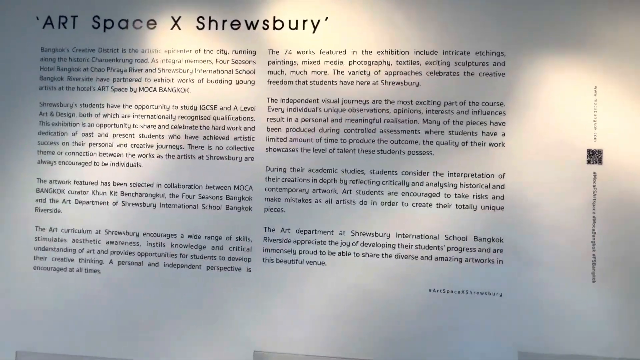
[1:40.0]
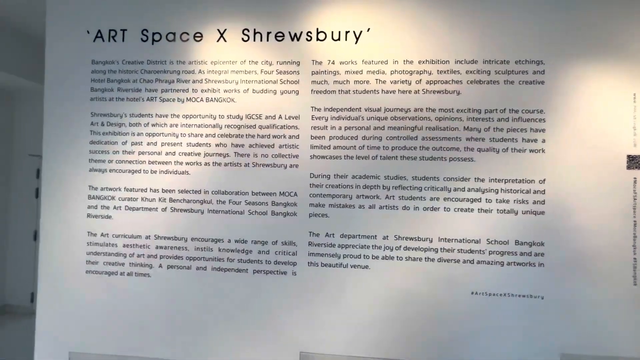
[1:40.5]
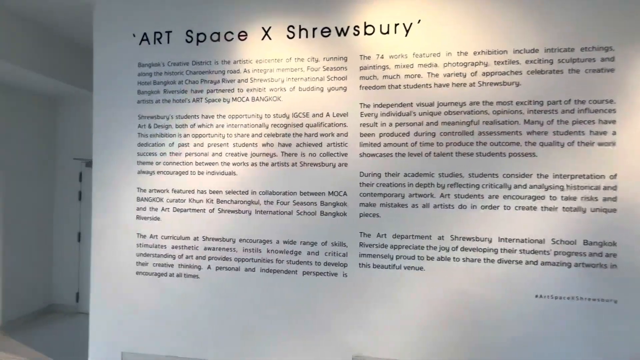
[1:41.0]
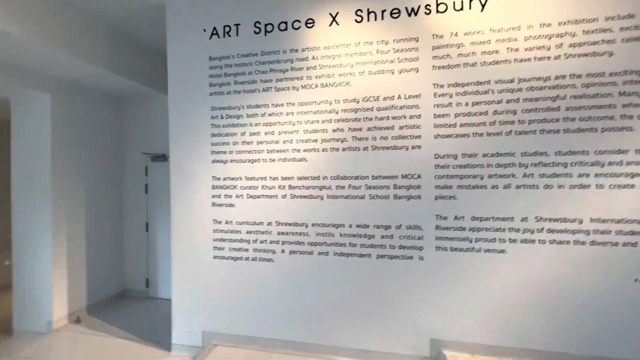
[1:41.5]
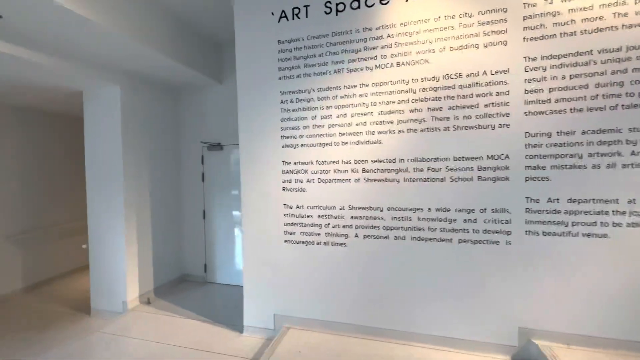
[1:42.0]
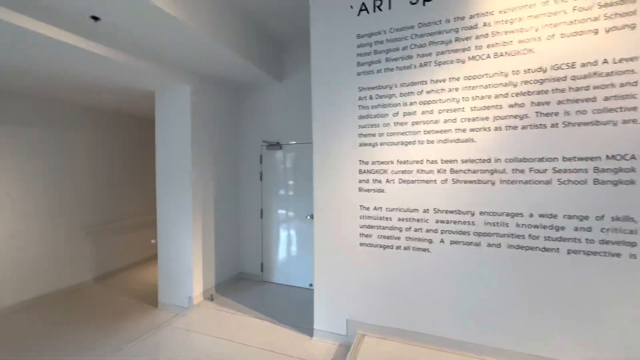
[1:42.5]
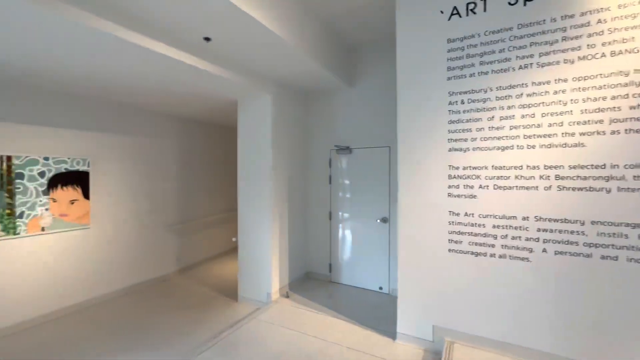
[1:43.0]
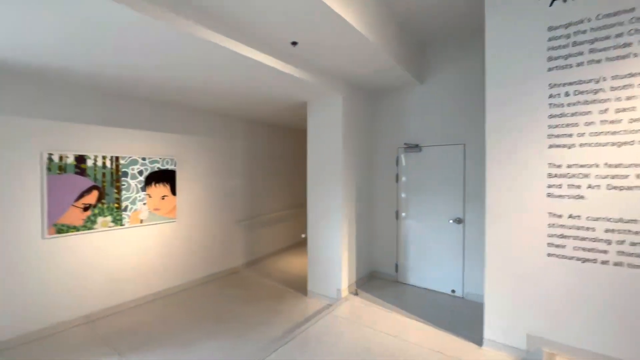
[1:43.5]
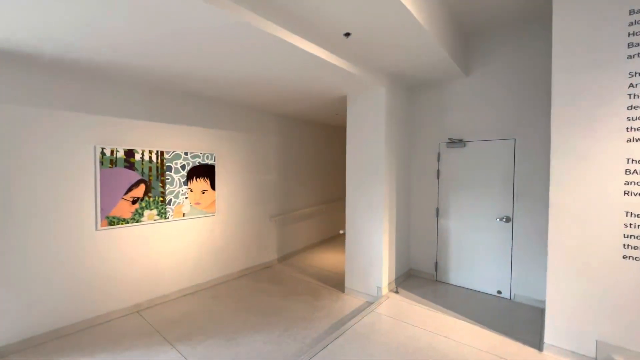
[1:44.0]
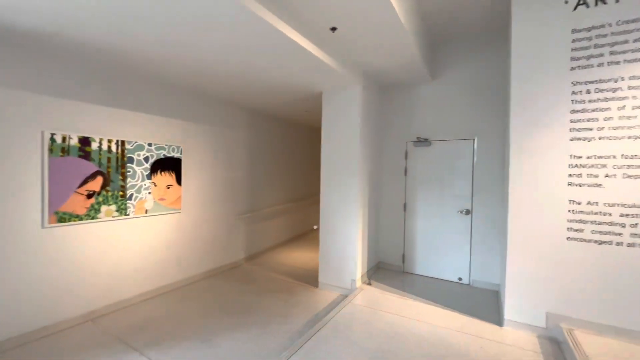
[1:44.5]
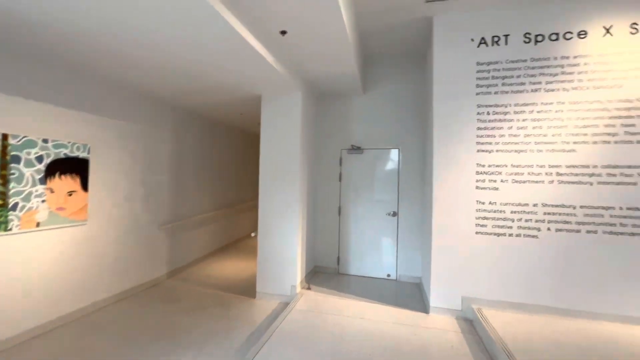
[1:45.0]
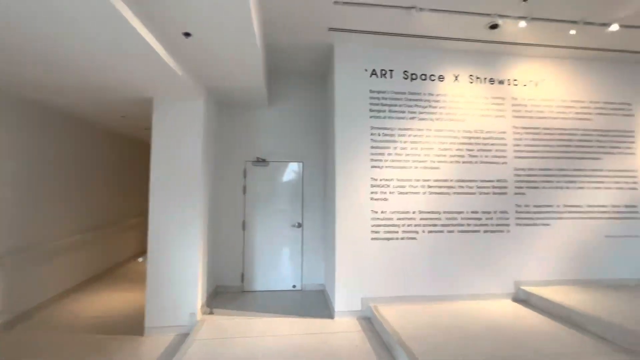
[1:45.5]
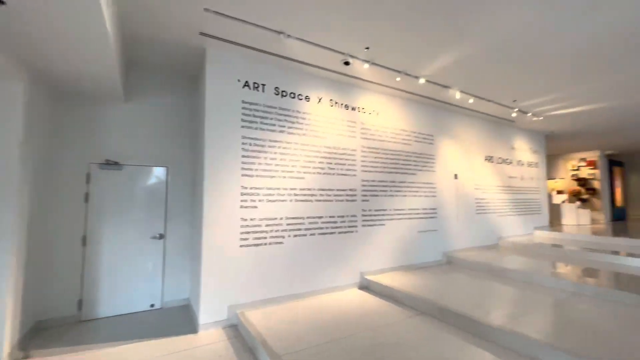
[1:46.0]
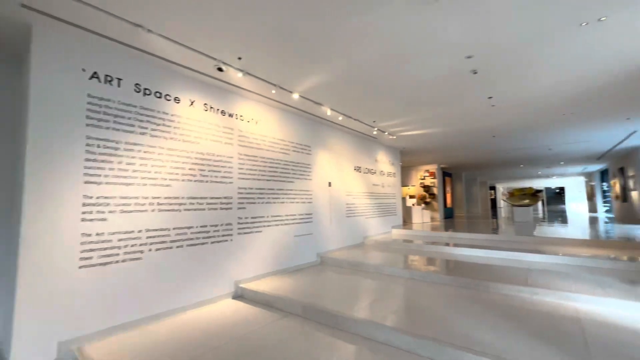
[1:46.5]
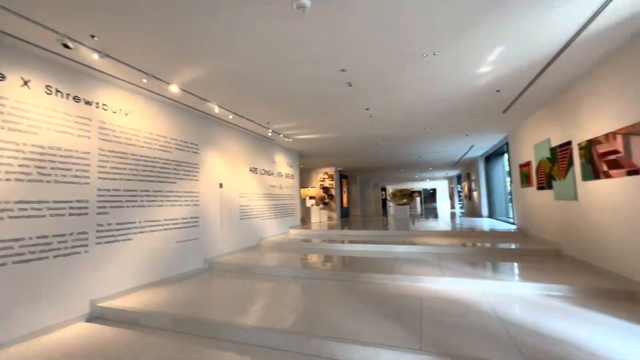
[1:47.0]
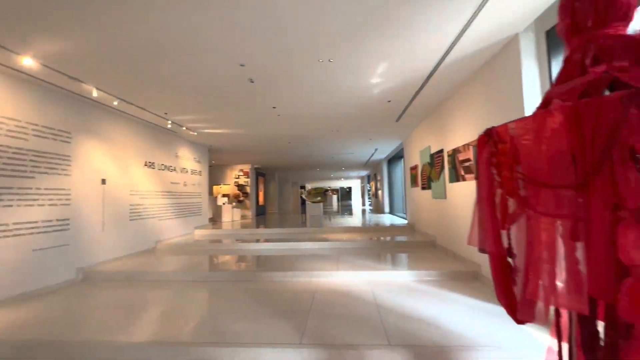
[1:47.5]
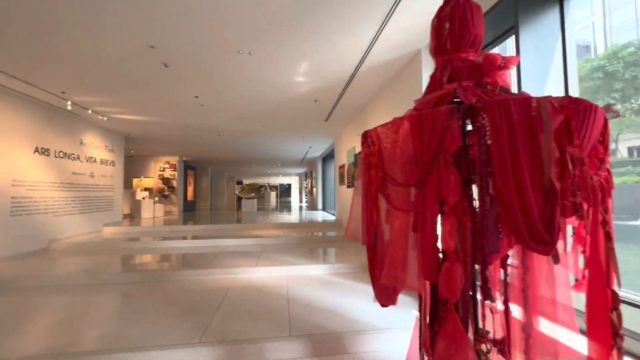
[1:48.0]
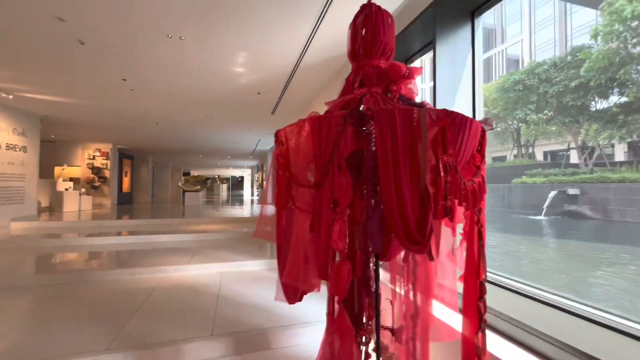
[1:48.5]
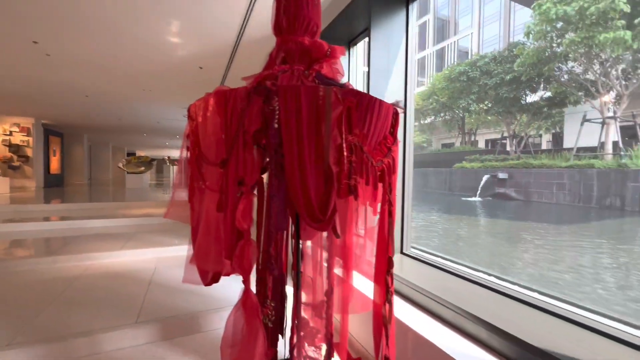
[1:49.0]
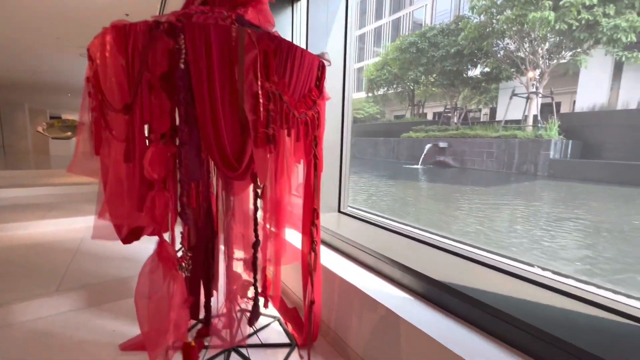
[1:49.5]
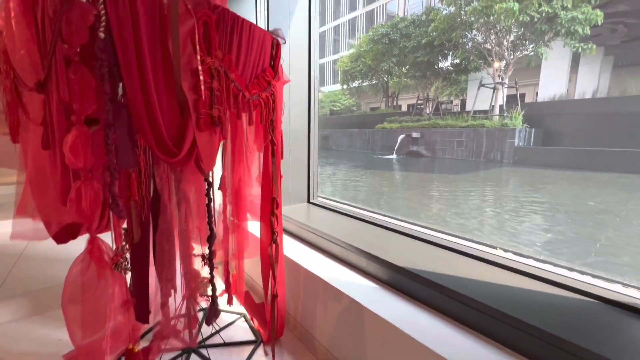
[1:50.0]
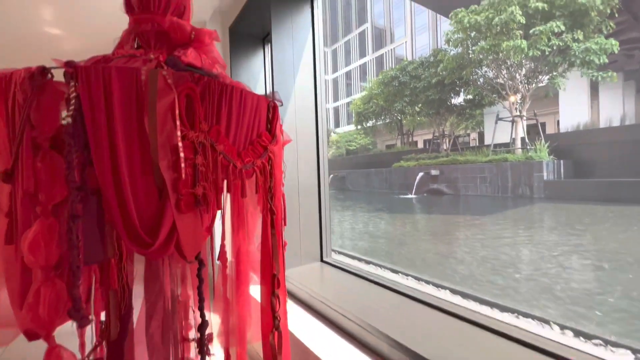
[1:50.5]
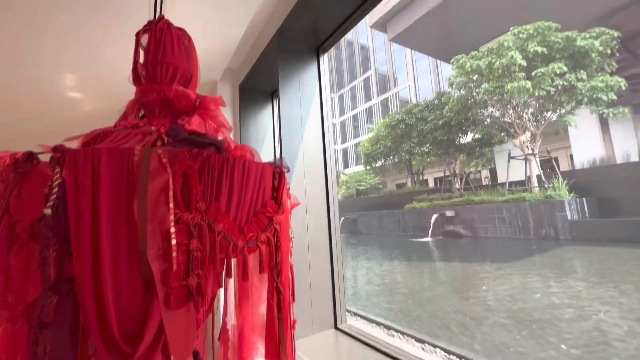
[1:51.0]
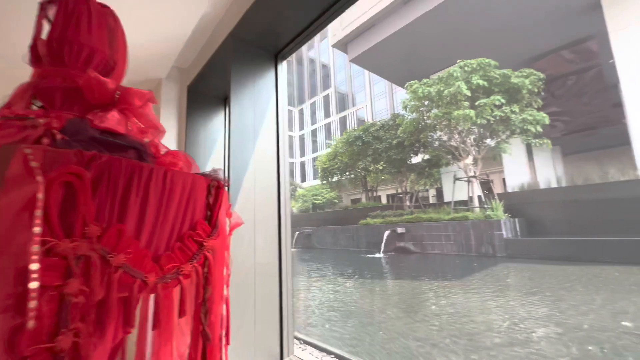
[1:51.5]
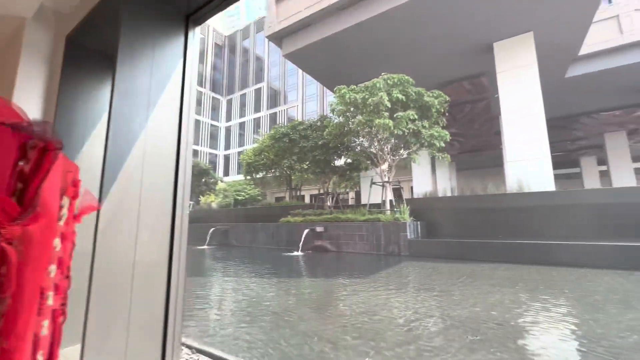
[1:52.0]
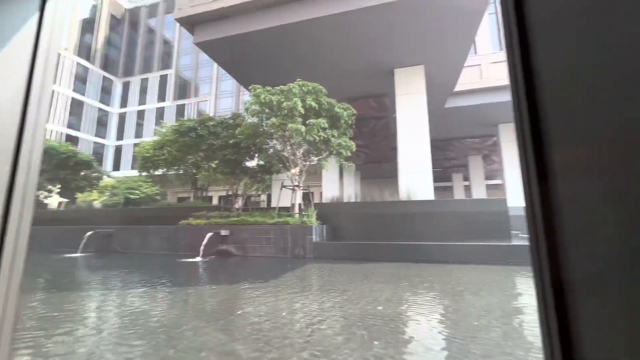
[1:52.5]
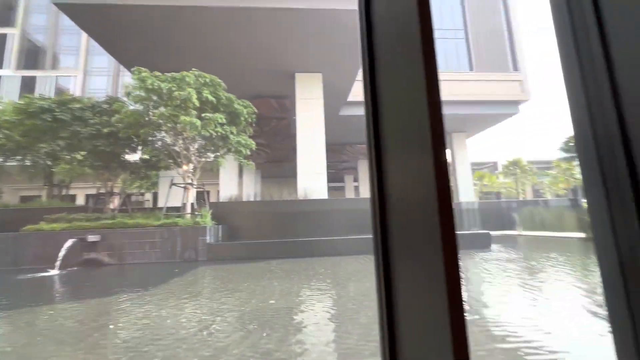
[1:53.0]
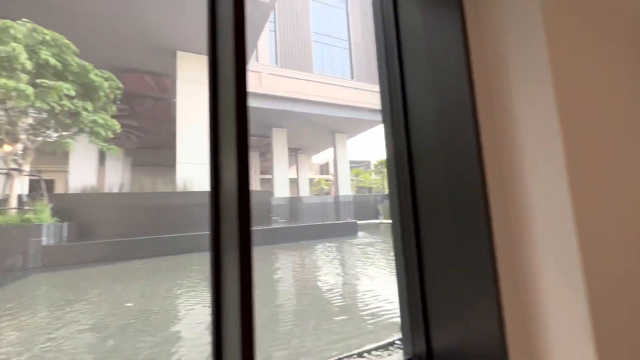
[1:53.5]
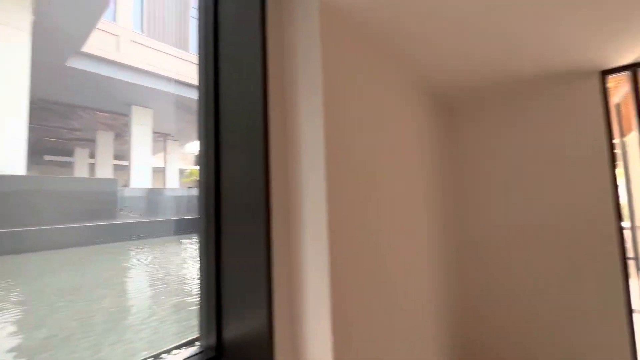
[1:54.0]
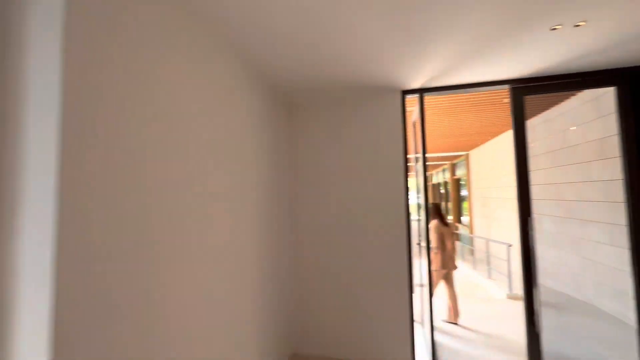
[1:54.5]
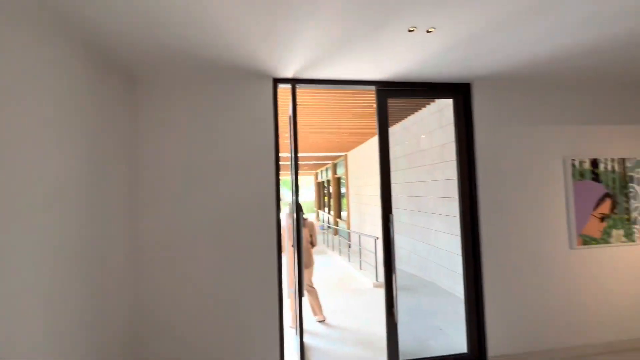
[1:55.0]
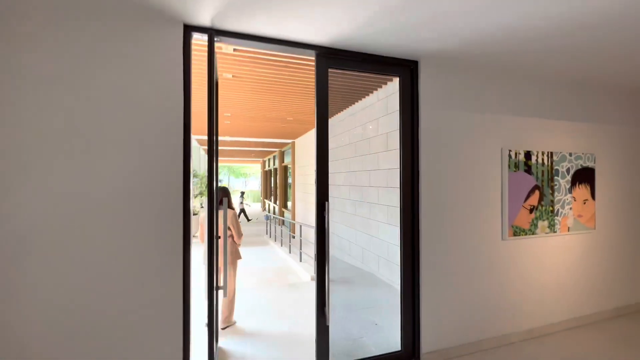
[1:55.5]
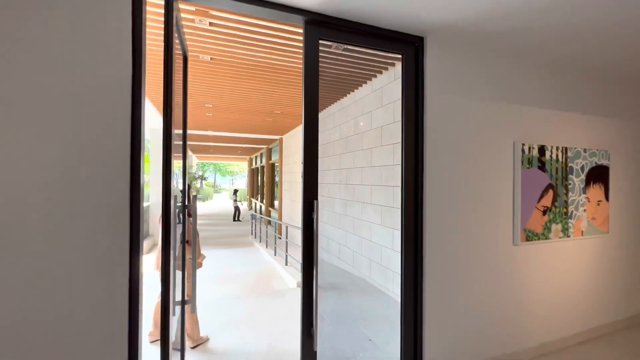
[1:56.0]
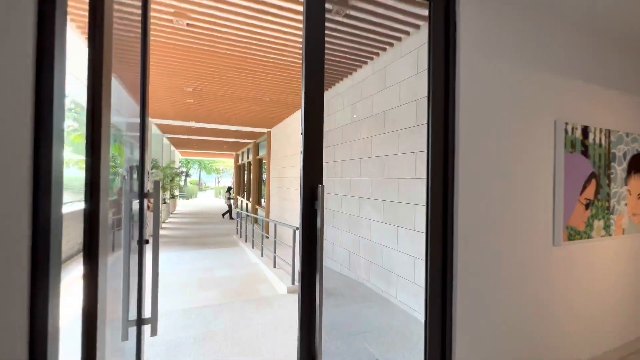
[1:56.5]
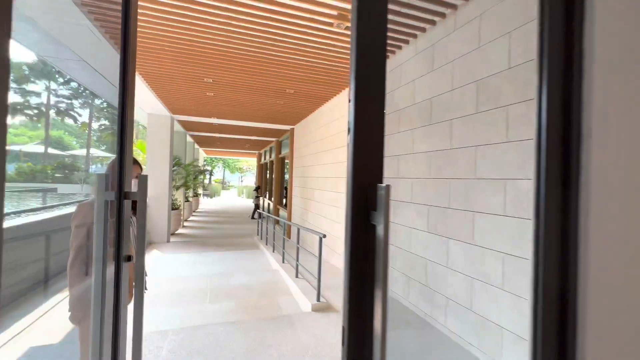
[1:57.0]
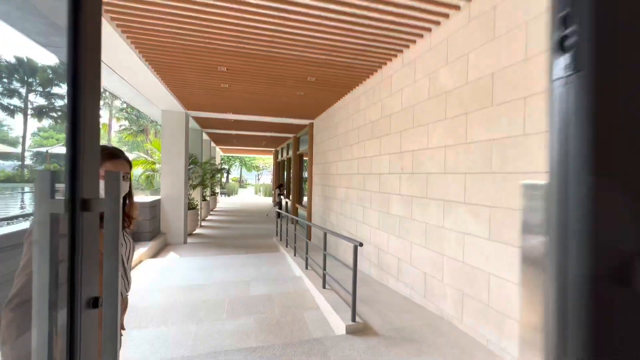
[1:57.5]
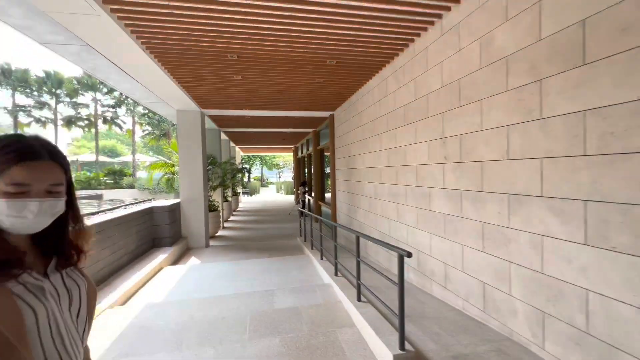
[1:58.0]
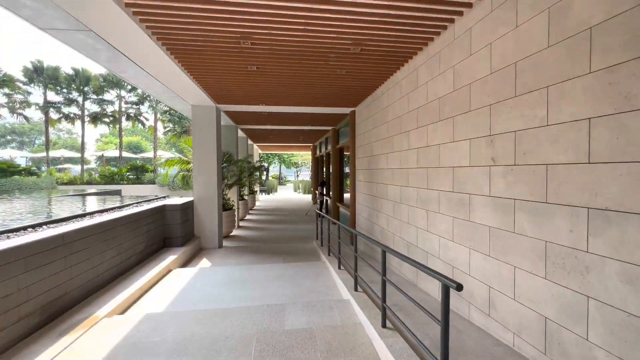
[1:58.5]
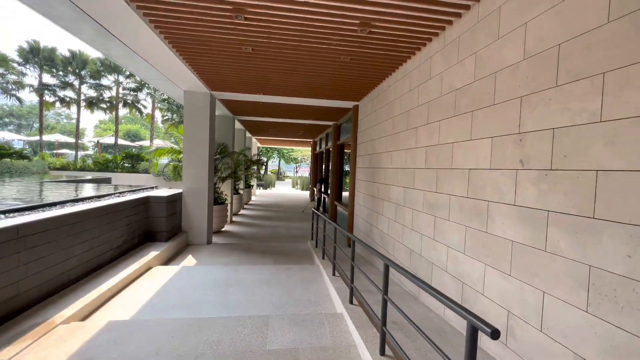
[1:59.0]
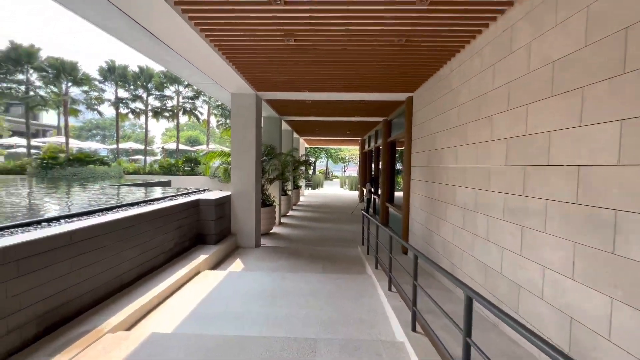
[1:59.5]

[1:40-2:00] A very large wall in the art gallery has a story written across it. Something that looks like a ghost in red sheets appears. The camera goes out of the gallery to a walkway with an elevated pond, with water coming into it in the form of a waterfall. The building is adjacent to a very large building, and trees are lined up. The gallery has mostly white walls, a white ceiling and very abstract art, and it is connected to a modern building like one found in a metropolitan area. Nobody else is around; when the door opens, one person is in the doorway, seemingly holding the door for the camera as it exits.